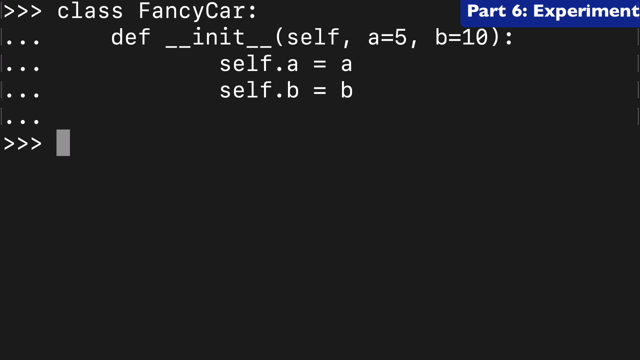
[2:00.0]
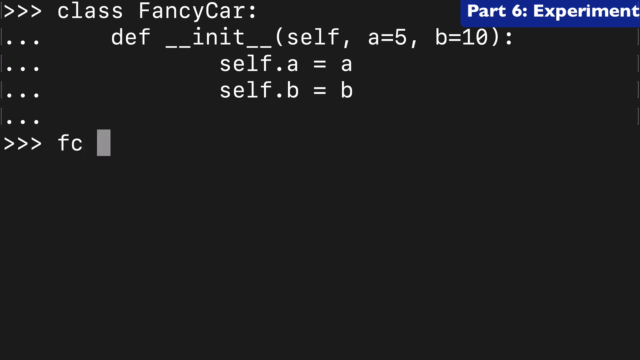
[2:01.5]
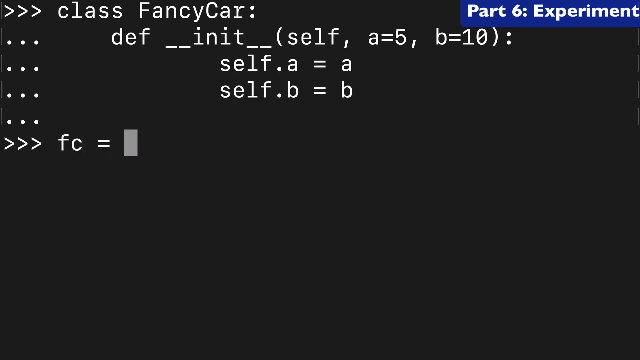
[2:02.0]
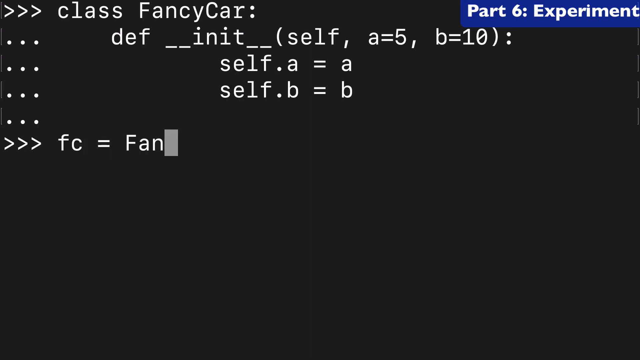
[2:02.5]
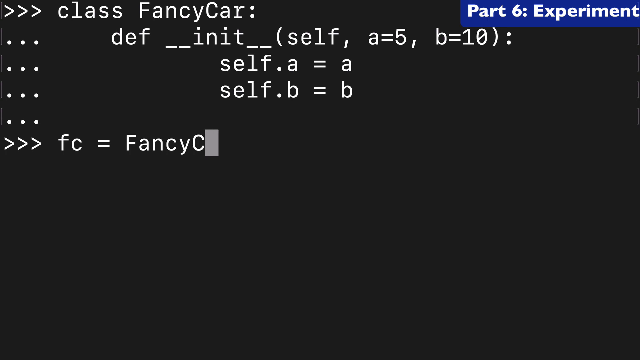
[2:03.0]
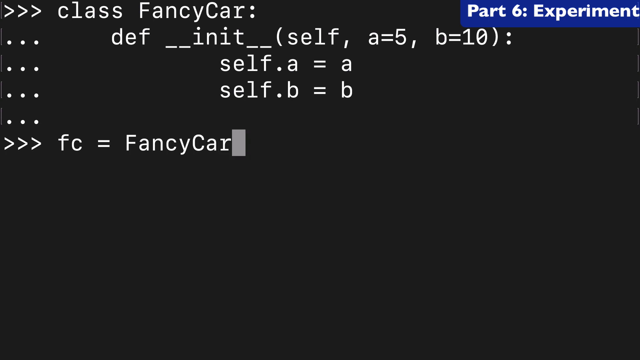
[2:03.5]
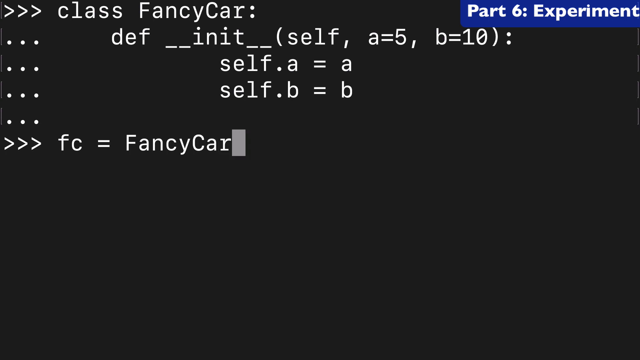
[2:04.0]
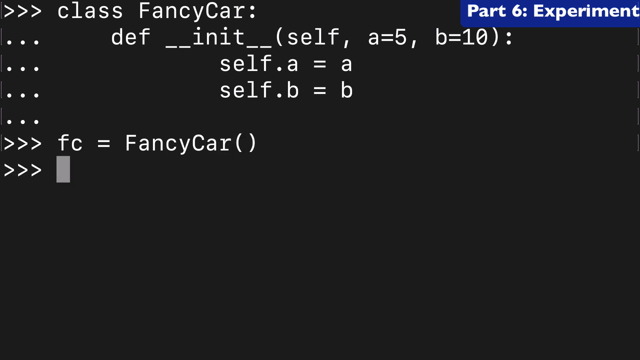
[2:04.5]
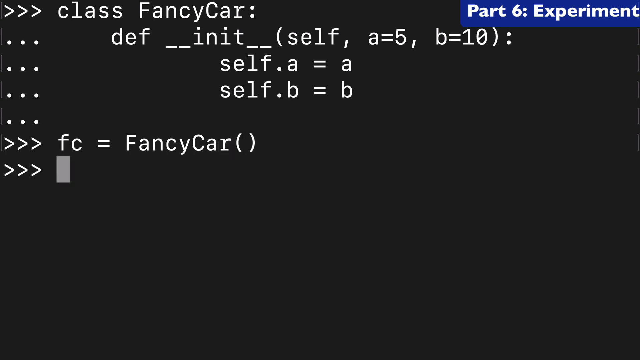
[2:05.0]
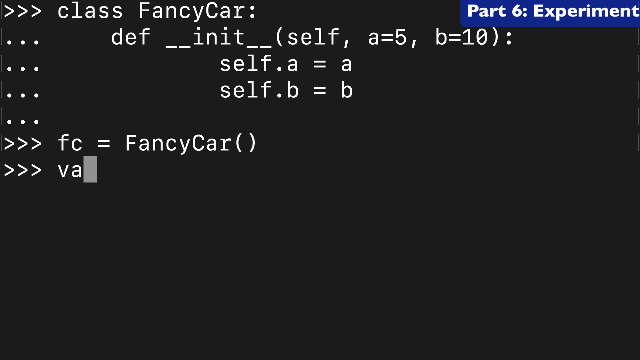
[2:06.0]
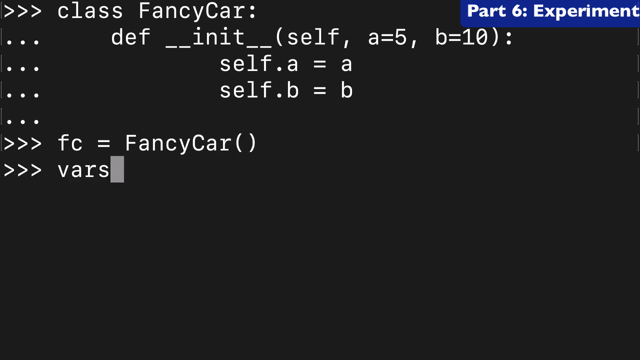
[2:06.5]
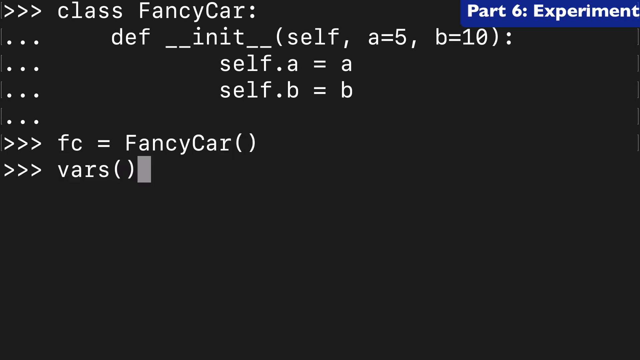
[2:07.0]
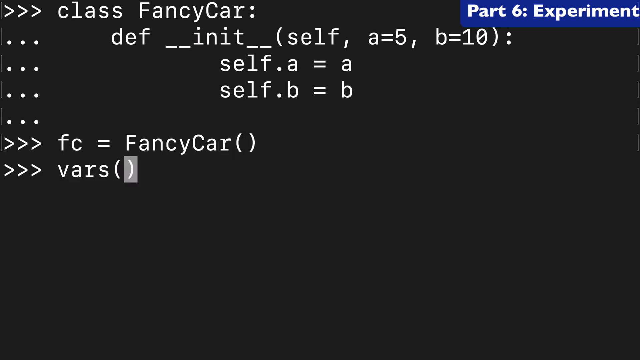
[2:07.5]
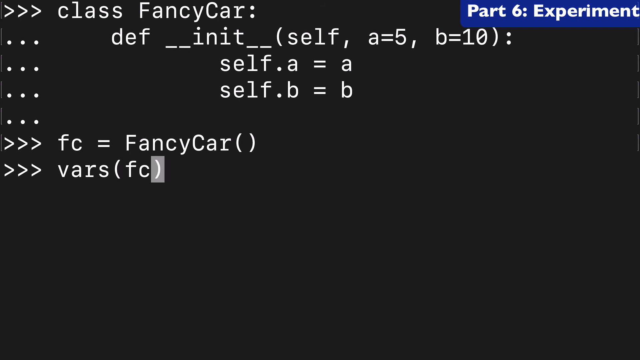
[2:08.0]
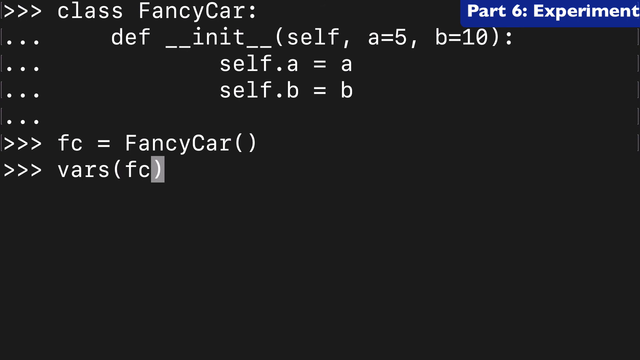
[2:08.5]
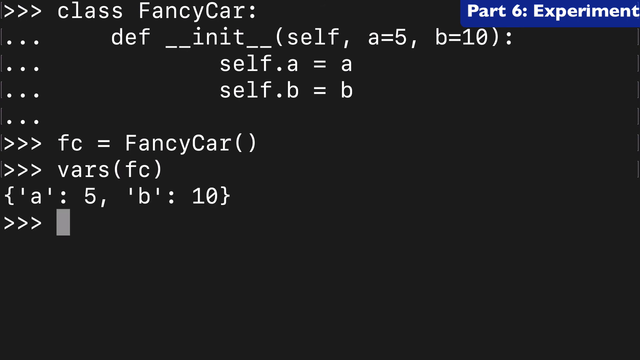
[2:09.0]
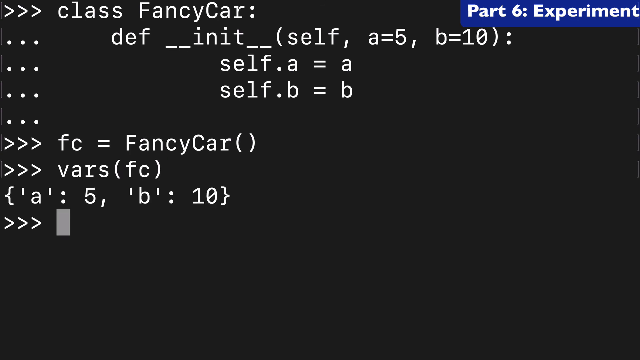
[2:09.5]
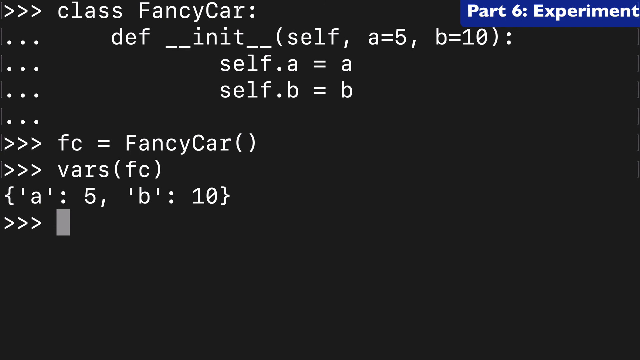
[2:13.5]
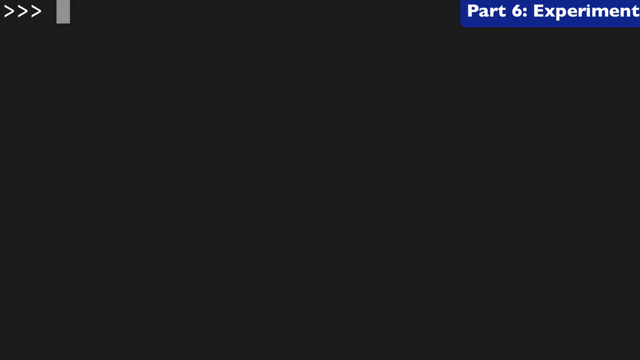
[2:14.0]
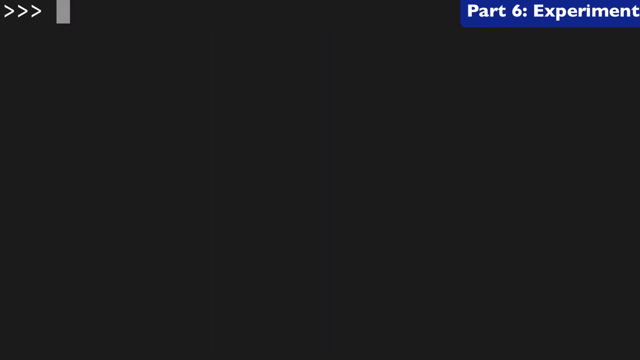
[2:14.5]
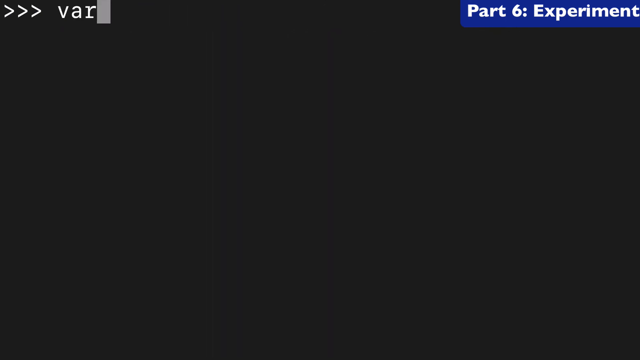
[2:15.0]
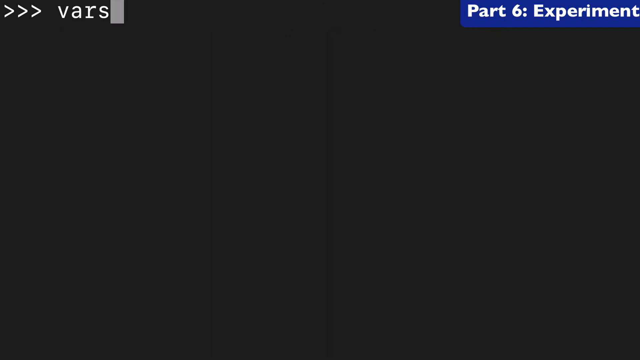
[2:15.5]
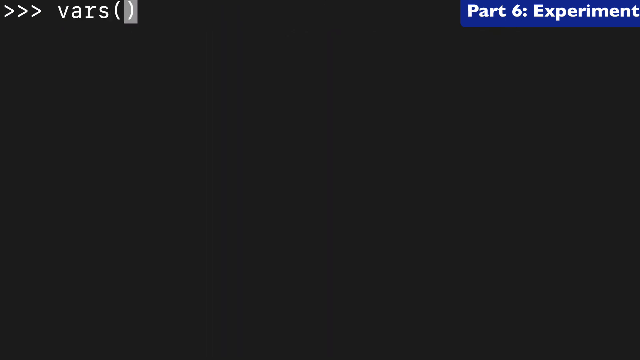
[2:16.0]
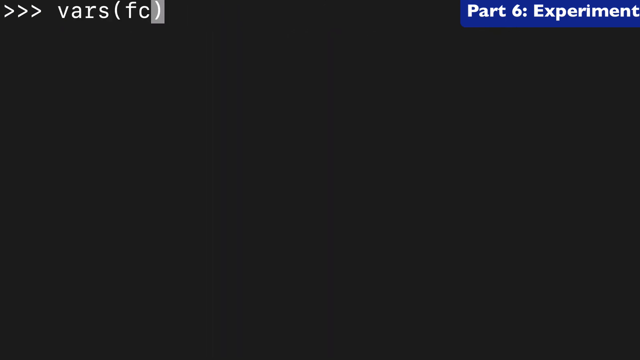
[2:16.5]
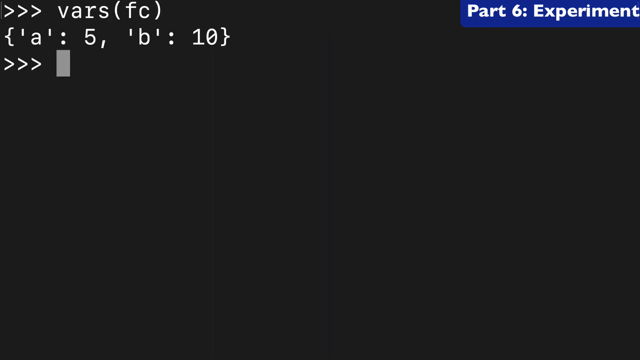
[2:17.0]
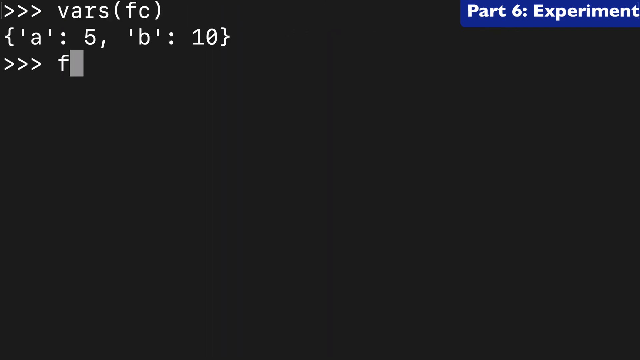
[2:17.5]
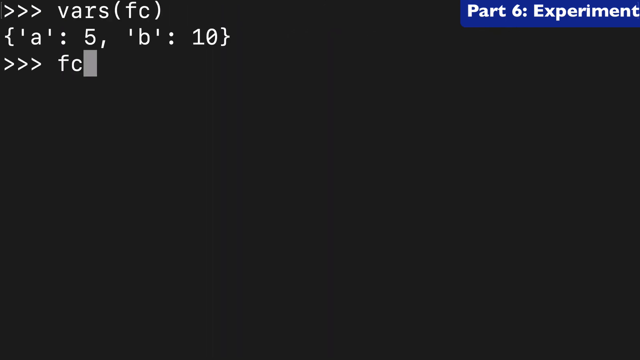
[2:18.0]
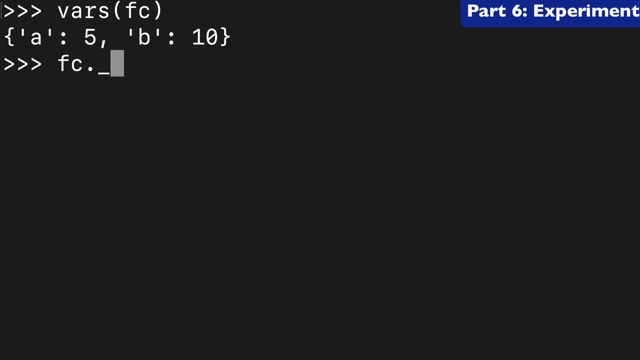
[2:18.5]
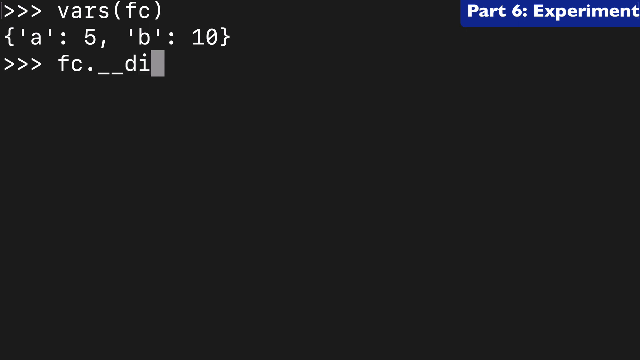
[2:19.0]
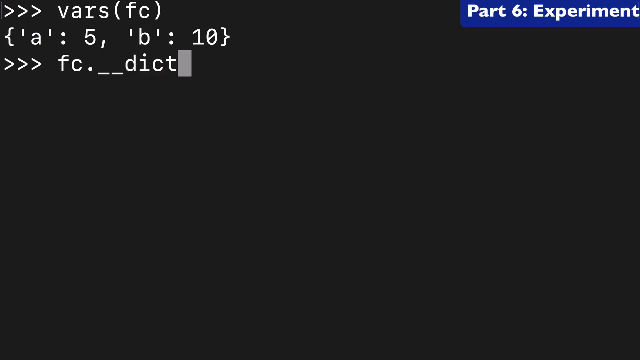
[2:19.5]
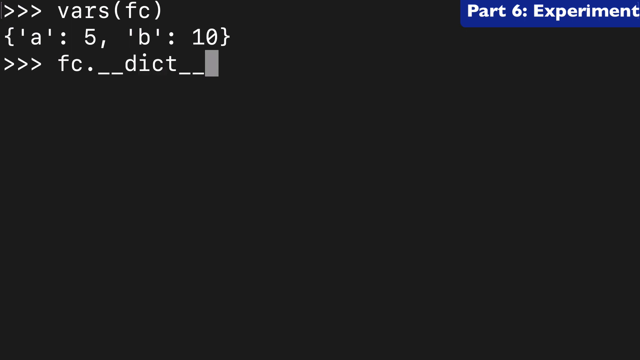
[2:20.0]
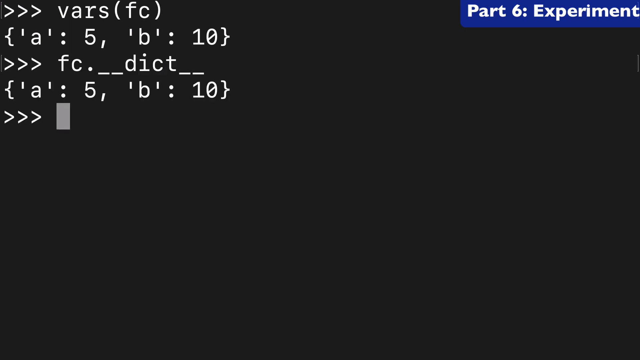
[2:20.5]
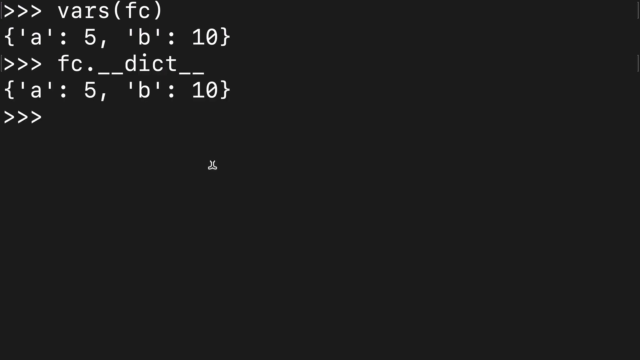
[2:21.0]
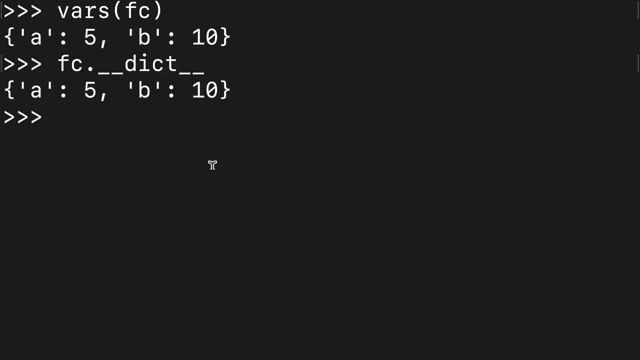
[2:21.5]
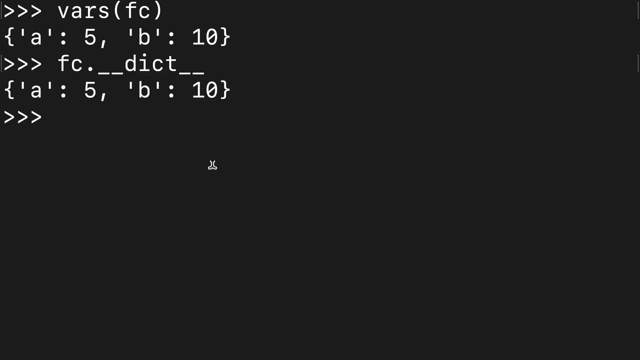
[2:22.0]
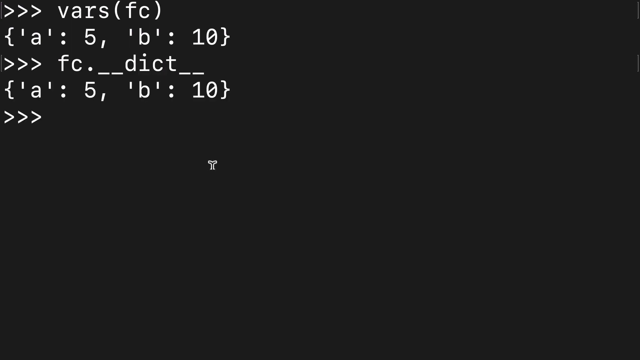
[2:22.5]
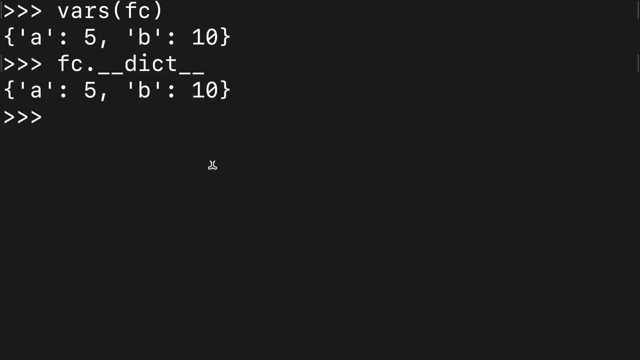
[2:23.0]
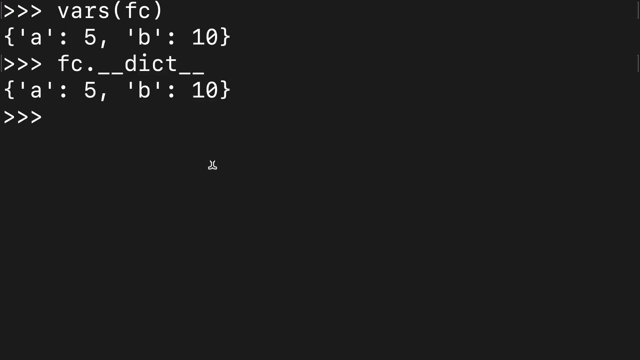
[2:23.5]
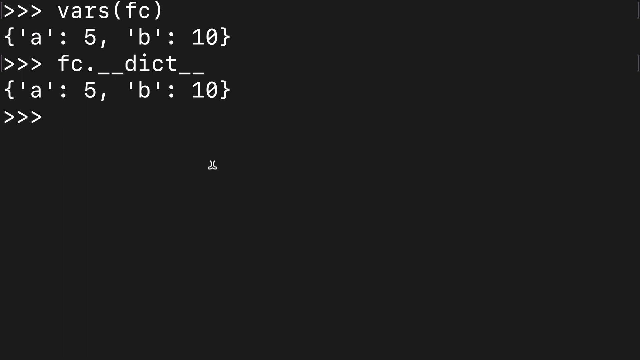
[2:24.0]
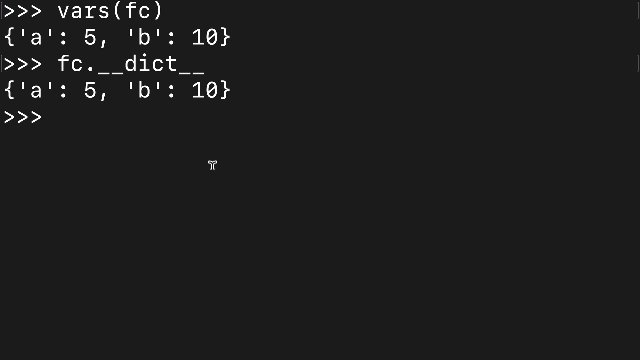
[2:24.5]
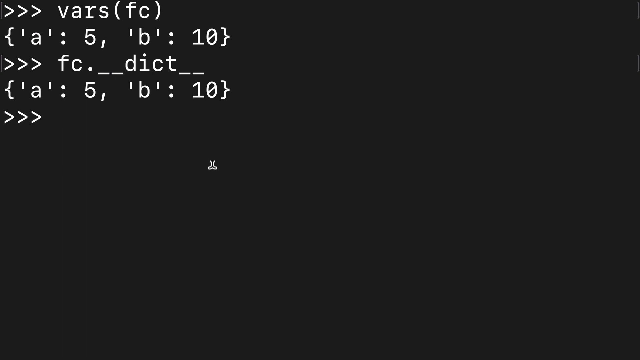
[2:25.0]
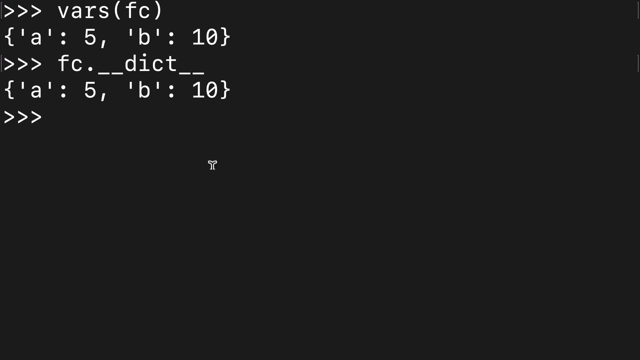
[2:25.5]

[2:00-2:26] In the upper right corner, white text on a blue rectangle says "Part 6" and "experiment". After what looks like three greater-than symbols, the code reads "class", then "def __init__(self, a=5, b=10)", with "self.a = a" underneath and another self assignment of b below it. Then "fc = FancyCar()" is entered, followed by "vars(fc)", which outputs "a: 5, b: 10". That clears, and "vars(fc)" again outputs "a: 5, b: 10". Then "fc.__dict__" is entered, and the output shows "a: 5, b: 10" inside brackets.